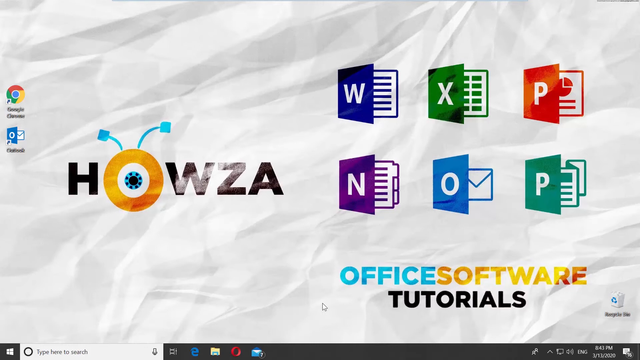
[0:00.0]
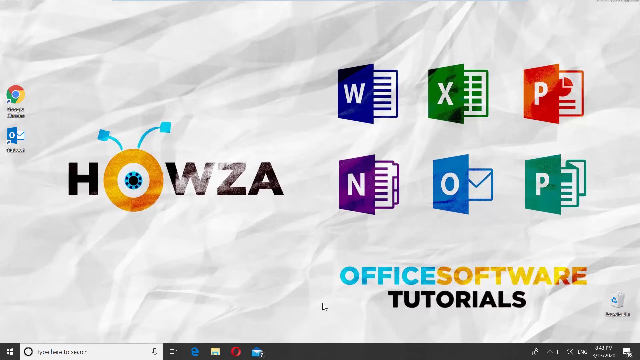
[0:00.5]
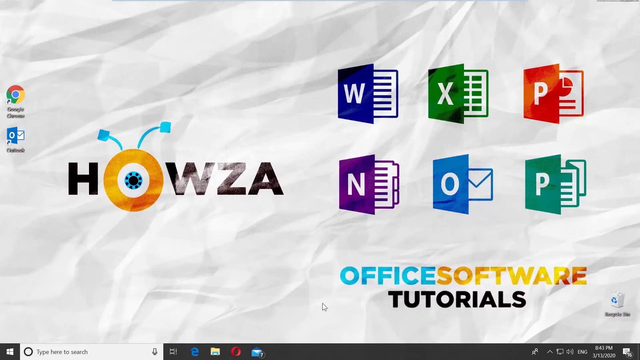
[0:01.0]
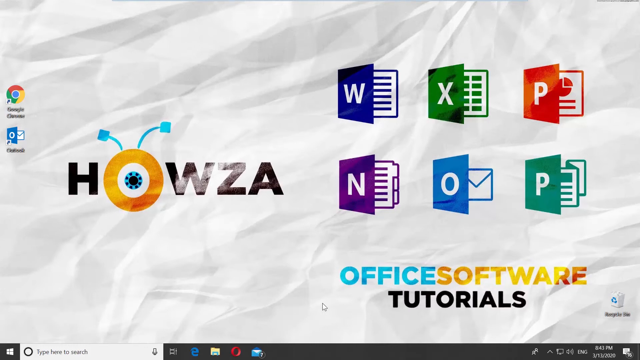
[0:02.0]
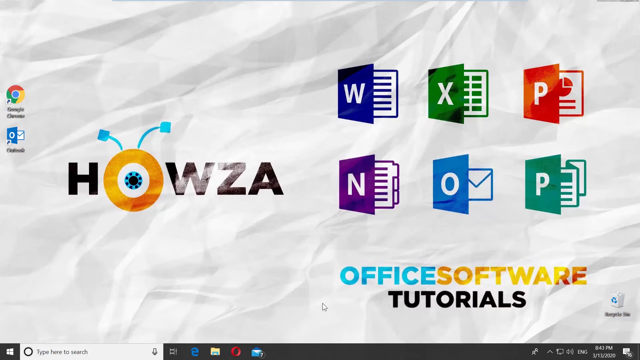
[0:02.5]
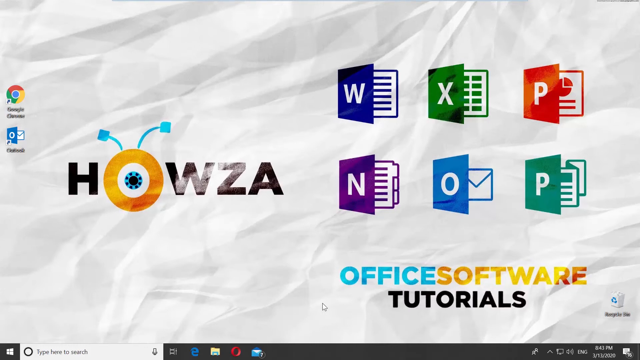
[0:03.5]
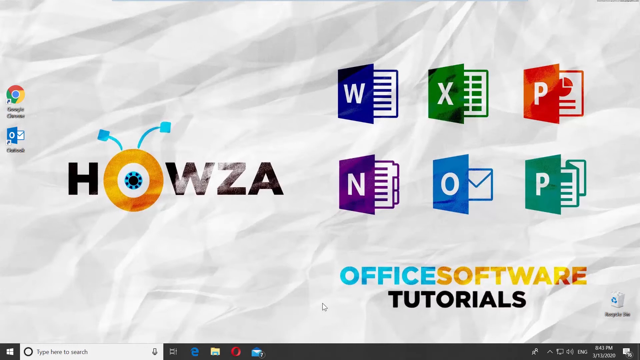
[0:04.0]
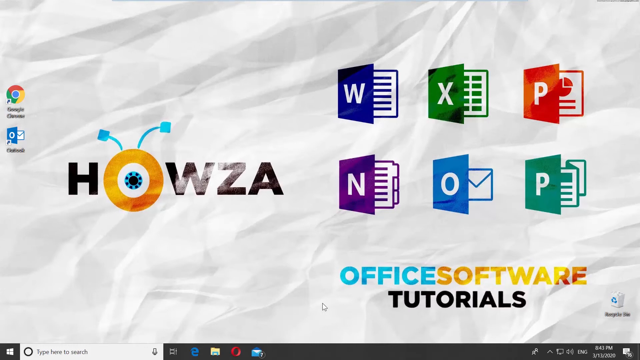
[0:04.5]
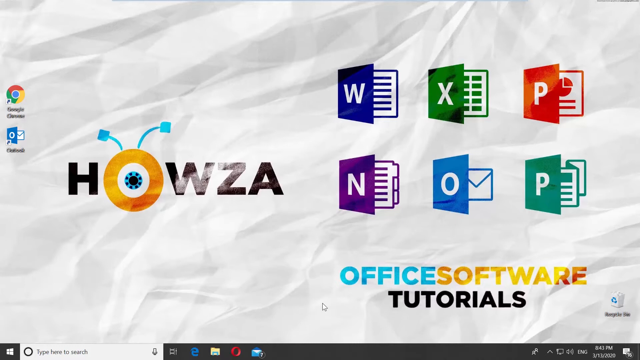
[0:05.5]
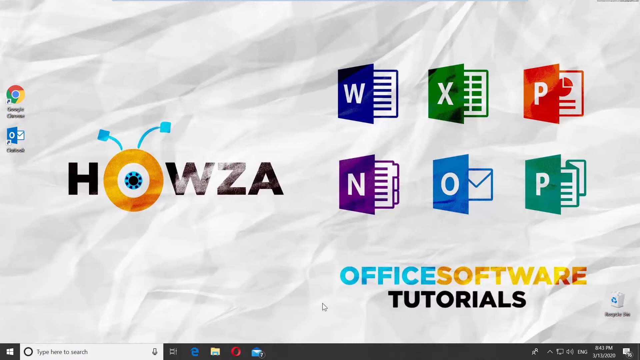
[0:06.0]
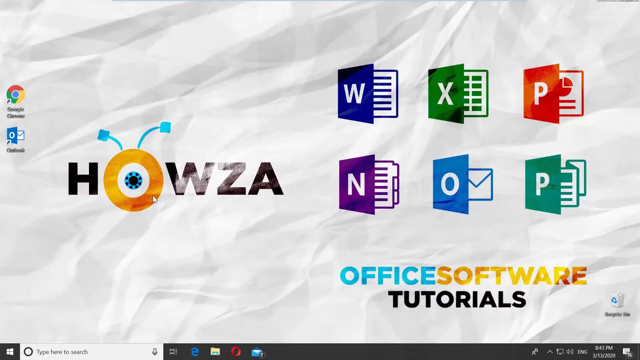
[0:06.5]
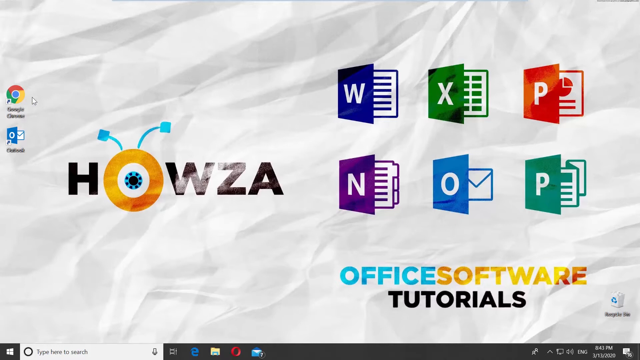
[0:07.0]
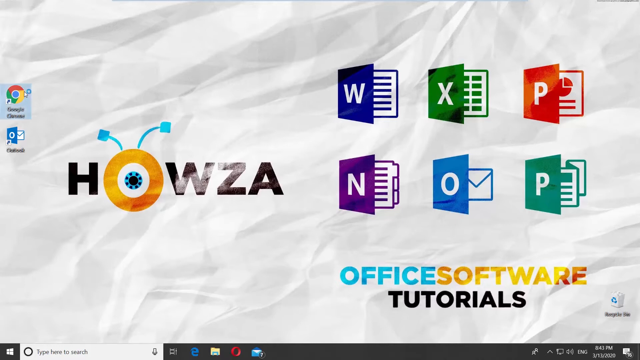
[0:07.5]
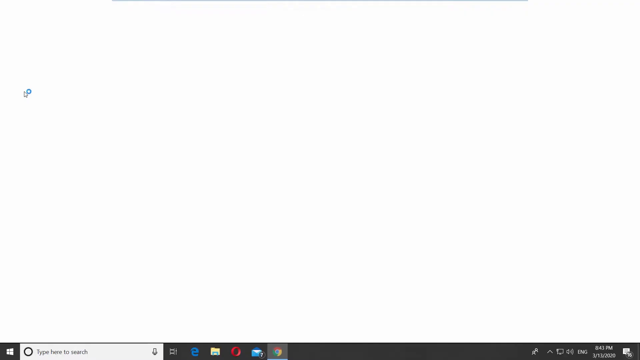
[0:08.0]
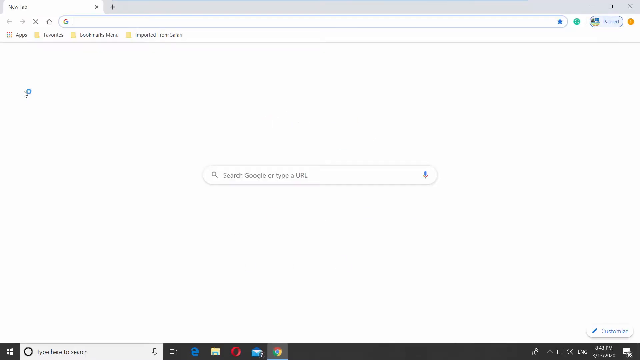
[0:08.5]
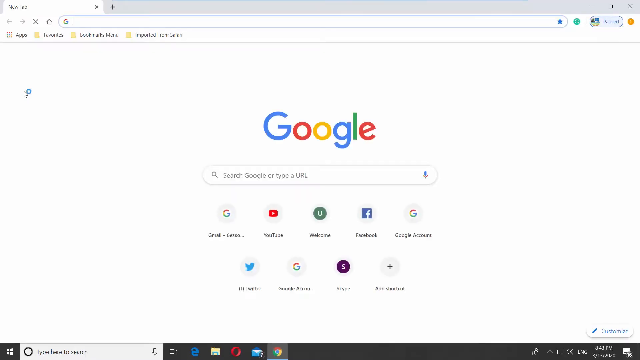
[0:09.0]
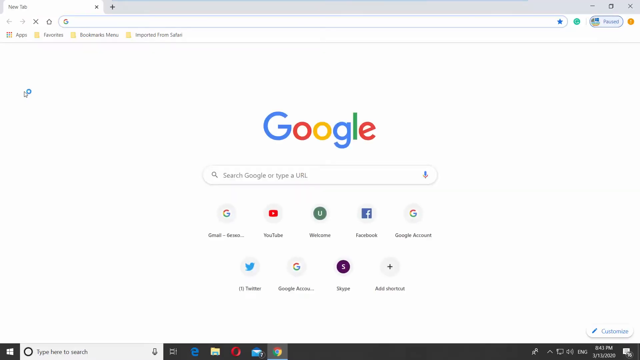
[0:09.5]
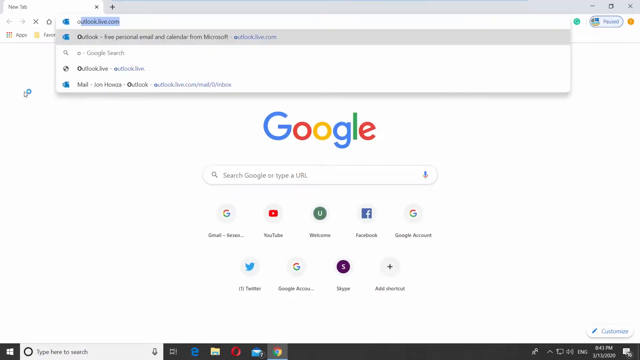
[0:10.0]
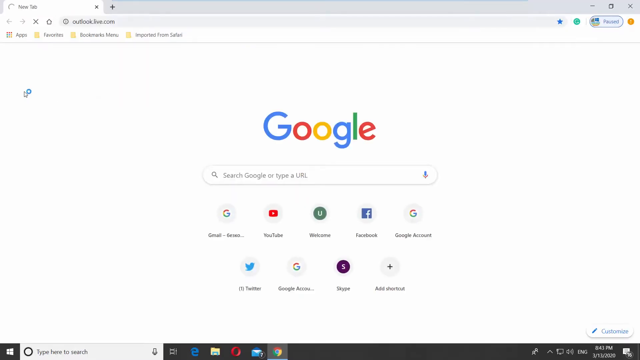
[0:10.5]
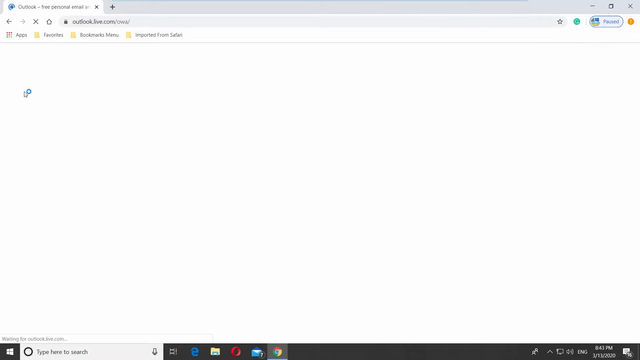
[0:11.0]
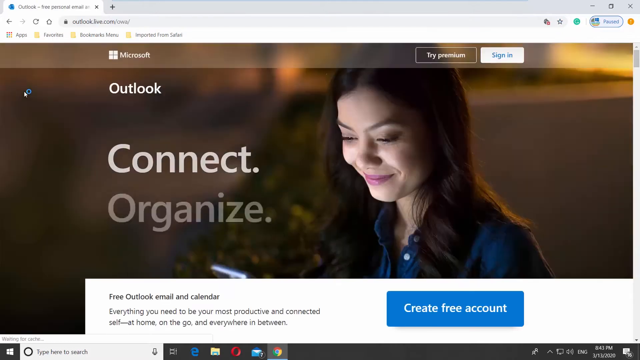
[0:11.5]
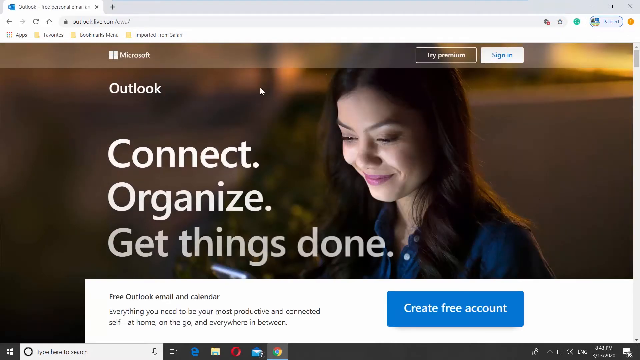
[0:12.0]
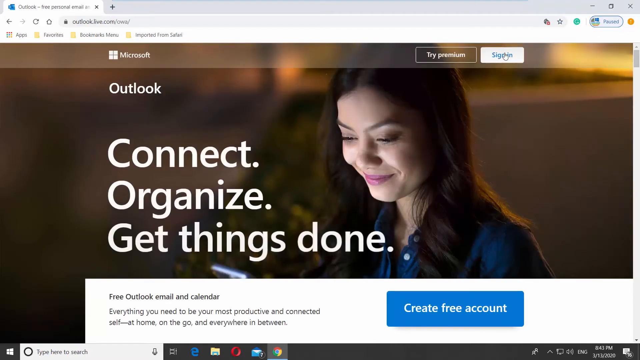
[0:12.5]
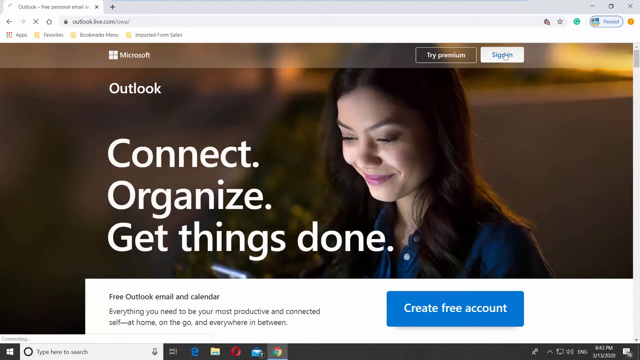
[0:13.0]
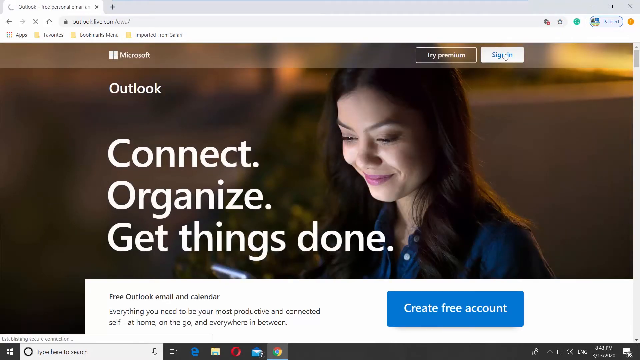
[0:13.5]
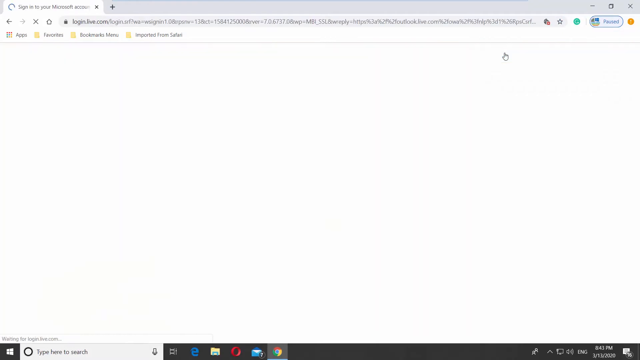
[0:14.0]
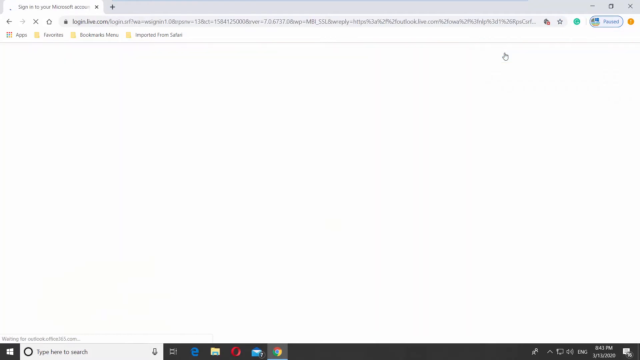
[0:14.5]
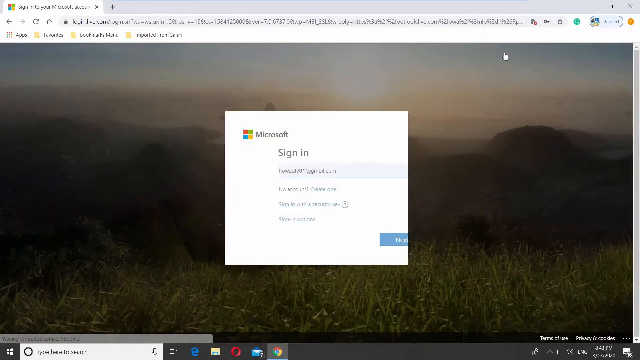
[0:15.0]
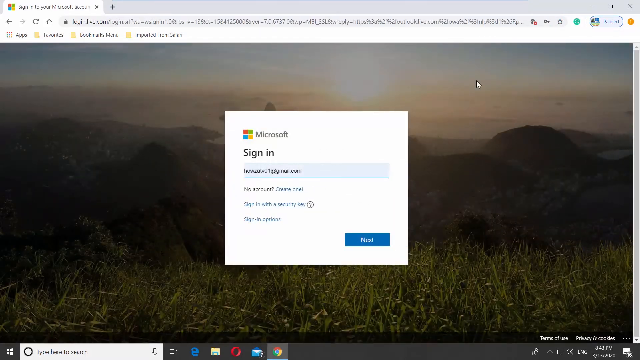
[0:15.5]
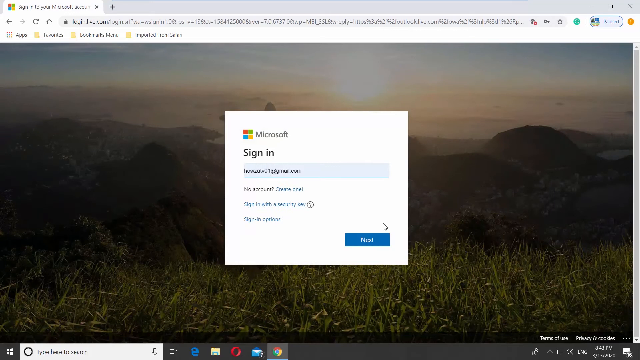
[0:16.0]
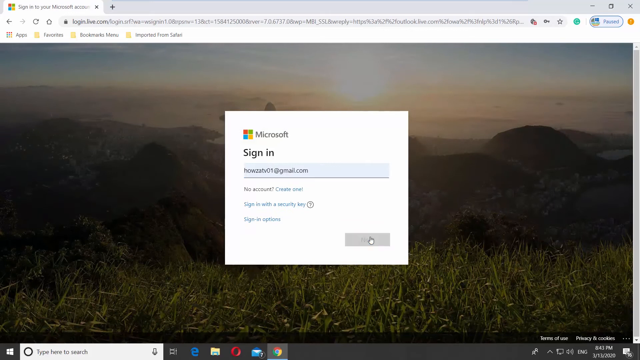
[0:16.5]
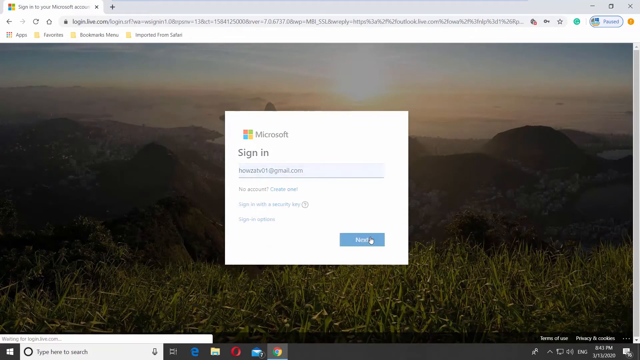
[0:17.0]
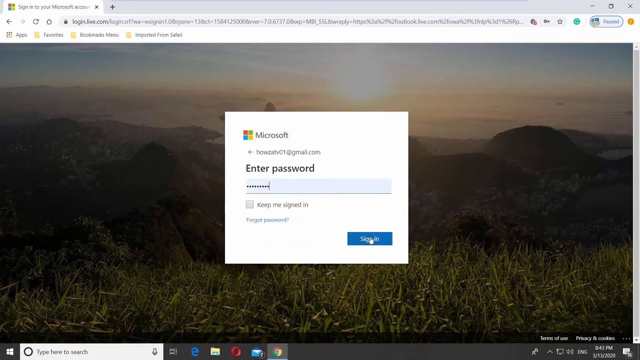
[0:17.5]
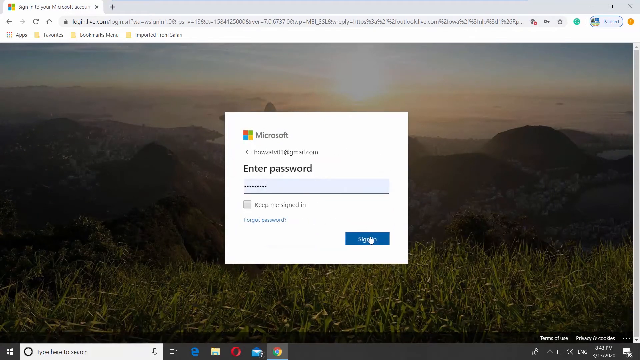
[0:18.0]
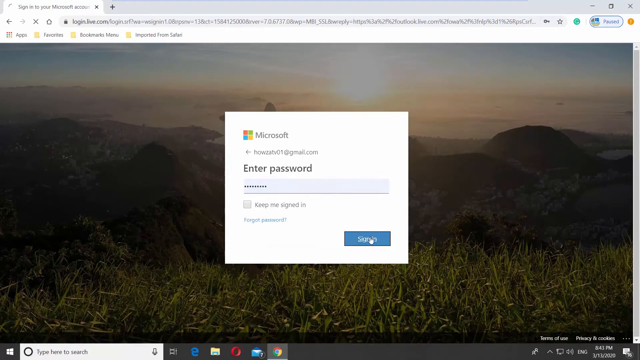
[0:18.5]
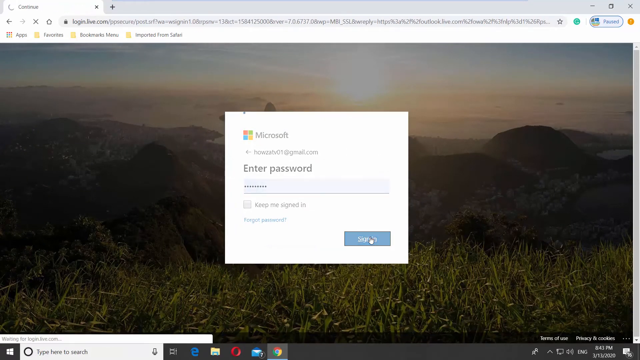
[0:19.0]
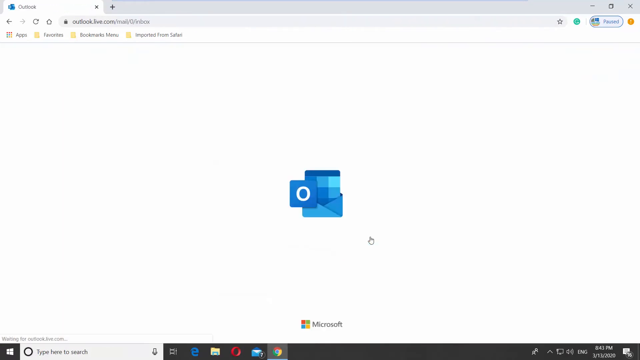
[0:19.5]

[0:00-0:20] A laptop or computer screen is shown. The background image appears to be some type of crumpled paper with the word "Hausa" written in black, the O in orange and looking like an eye or a one-eyed little monster. Beside that are various programs such as Word, Excel and PowerPoint, and below that is the text "office software tutorials". The person apparently clicks Google Chrome, which opens the Google page, where they type in "outlook.live.com". On the Outlook page they click the sign-in option, which brings up the sign-in screen where a username and password can be entered, and afterwards the page redirects and they are signed in.